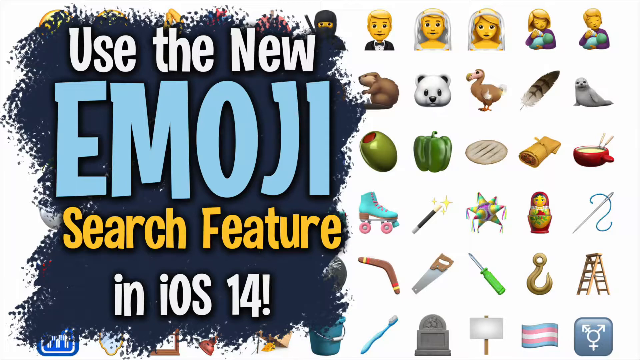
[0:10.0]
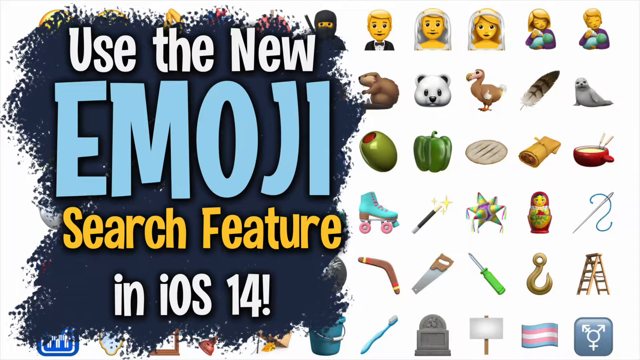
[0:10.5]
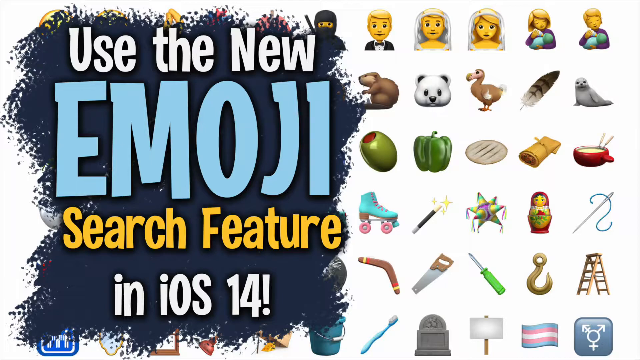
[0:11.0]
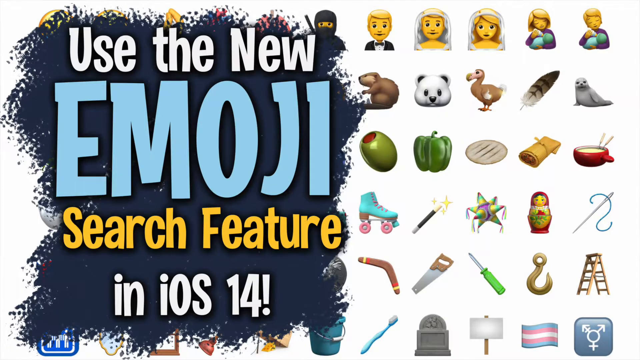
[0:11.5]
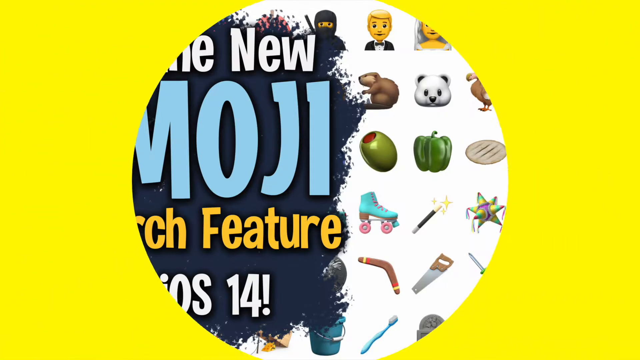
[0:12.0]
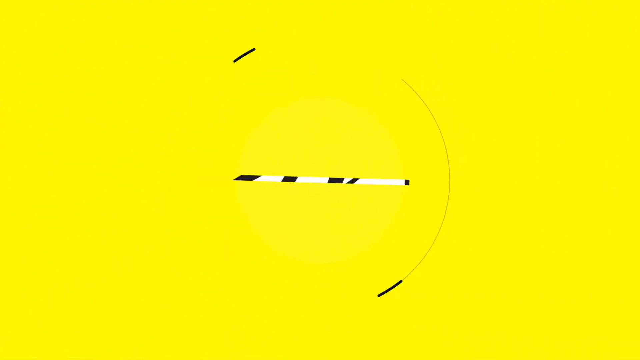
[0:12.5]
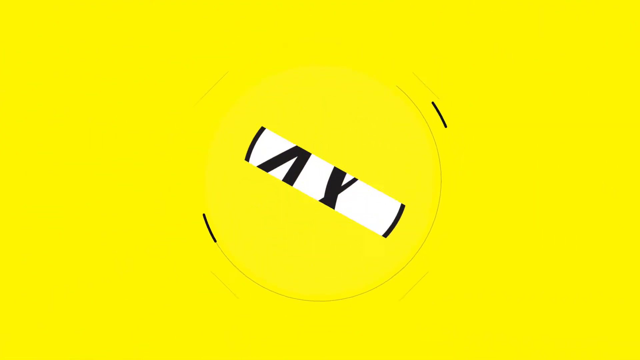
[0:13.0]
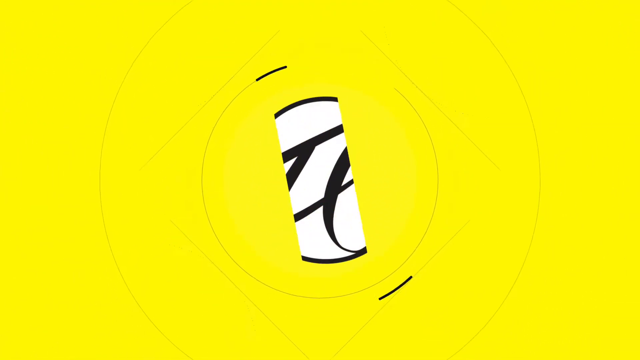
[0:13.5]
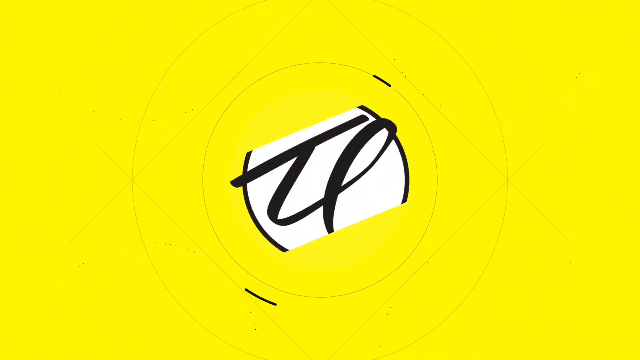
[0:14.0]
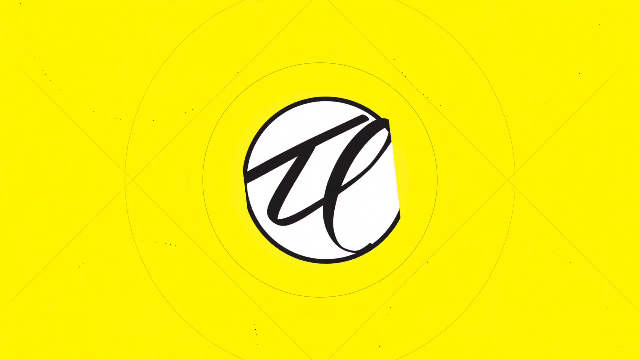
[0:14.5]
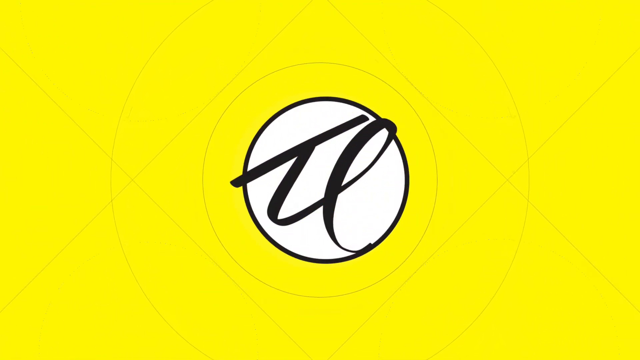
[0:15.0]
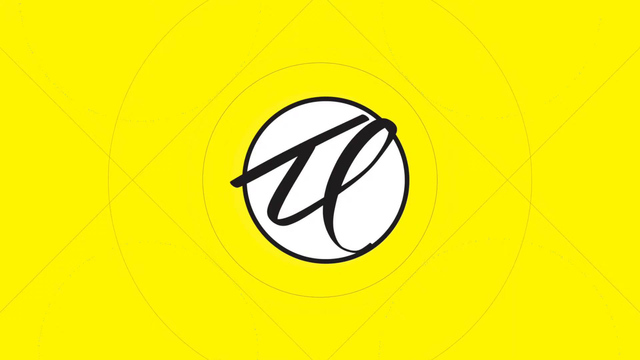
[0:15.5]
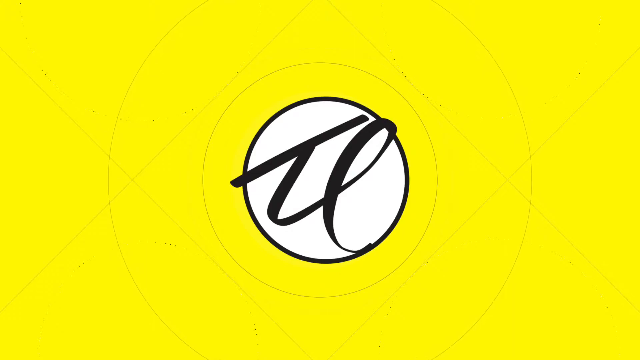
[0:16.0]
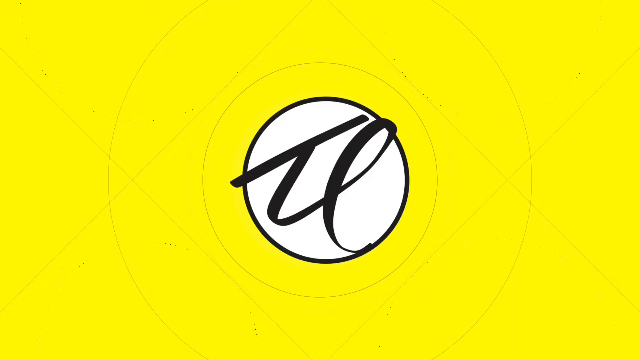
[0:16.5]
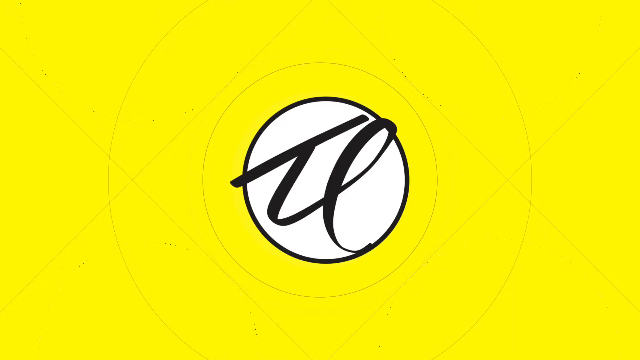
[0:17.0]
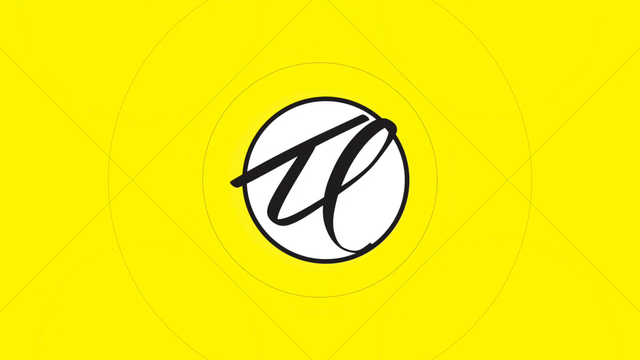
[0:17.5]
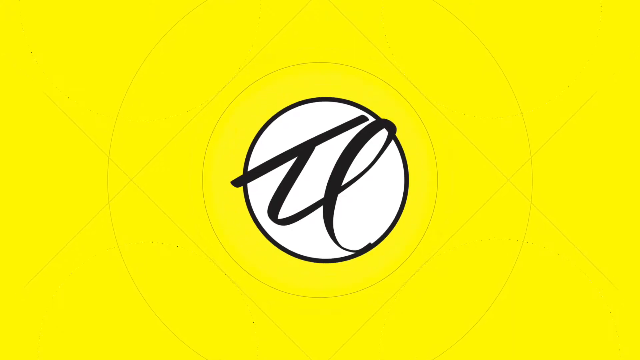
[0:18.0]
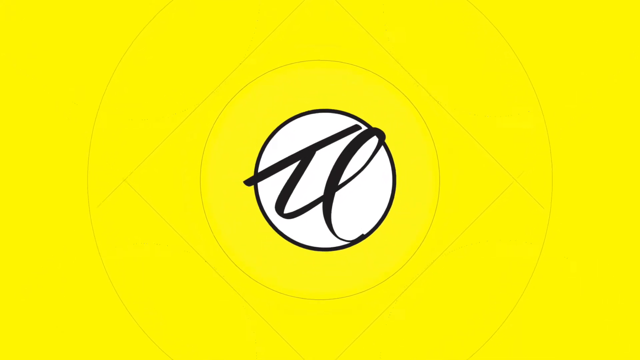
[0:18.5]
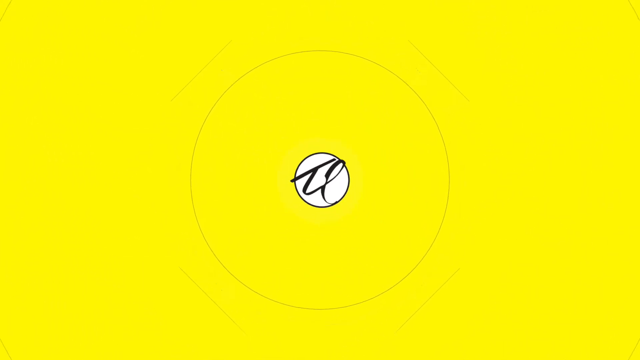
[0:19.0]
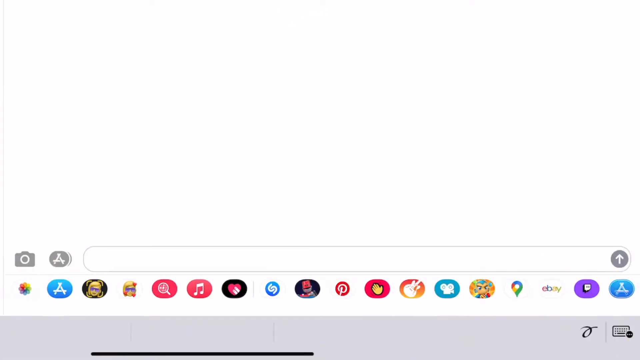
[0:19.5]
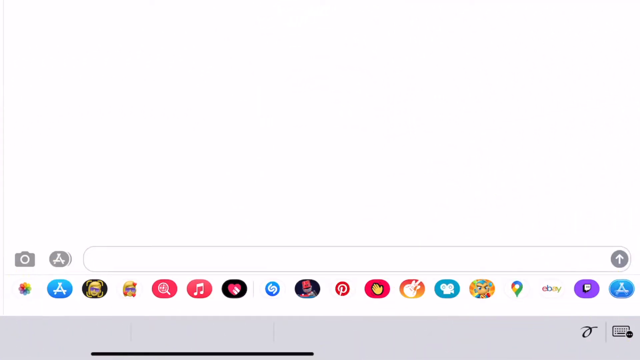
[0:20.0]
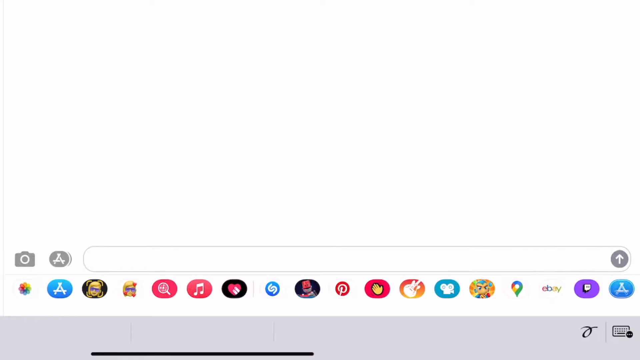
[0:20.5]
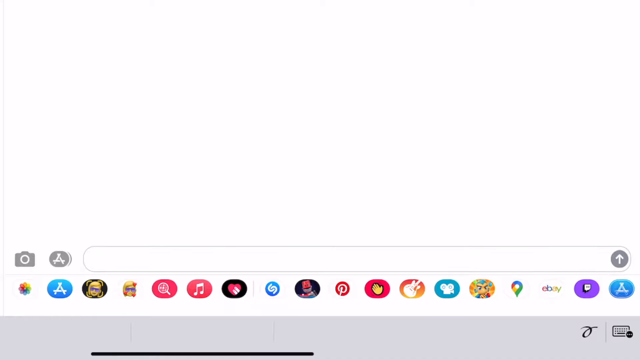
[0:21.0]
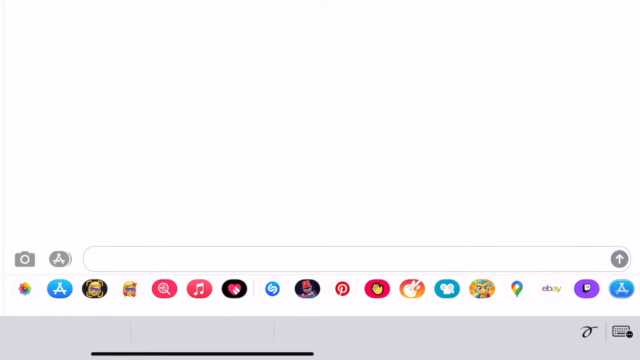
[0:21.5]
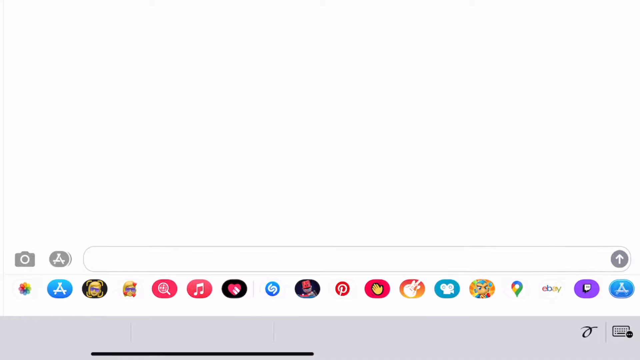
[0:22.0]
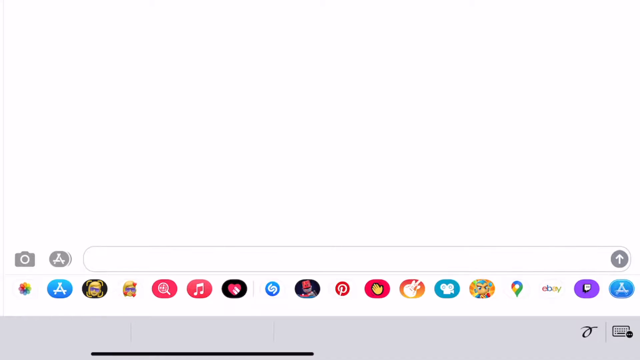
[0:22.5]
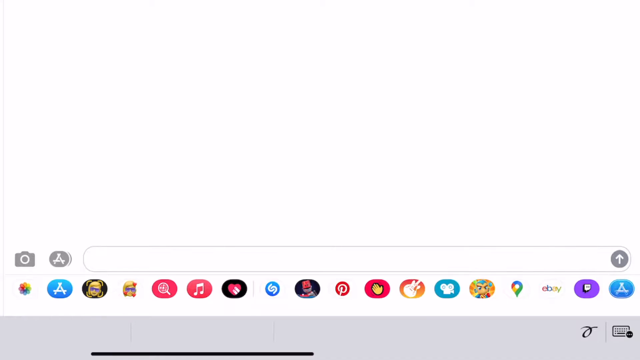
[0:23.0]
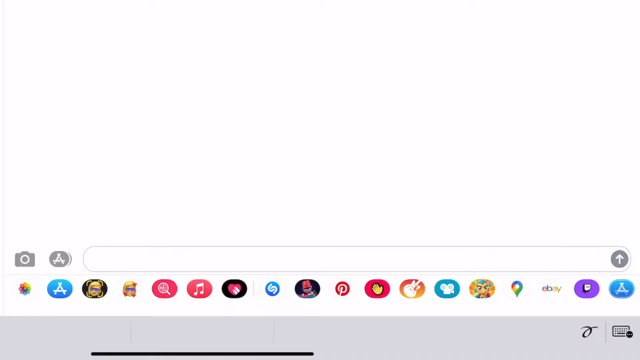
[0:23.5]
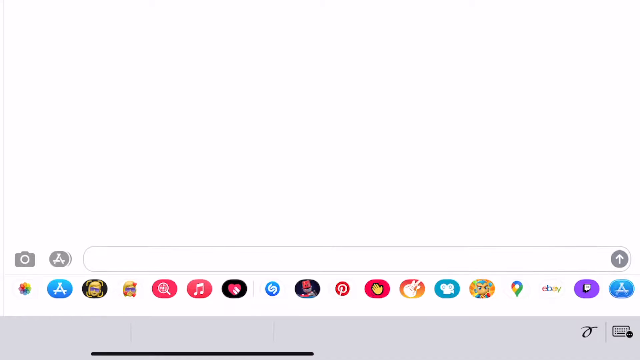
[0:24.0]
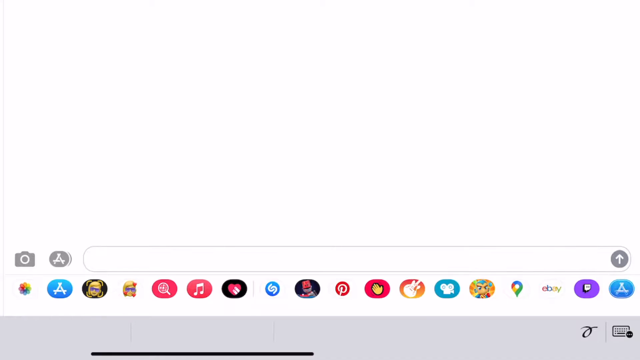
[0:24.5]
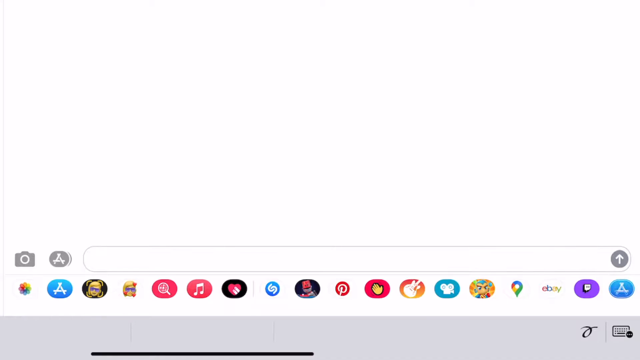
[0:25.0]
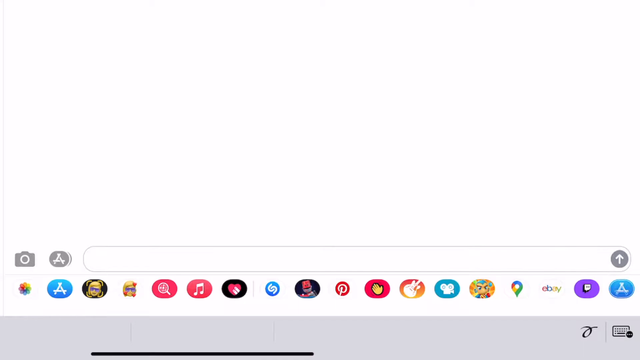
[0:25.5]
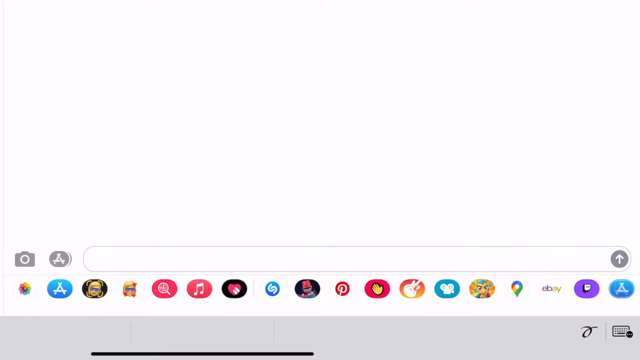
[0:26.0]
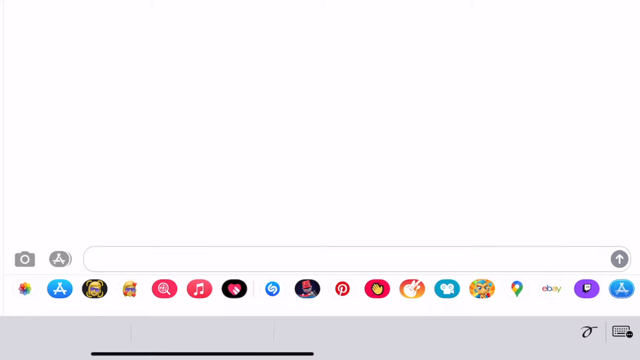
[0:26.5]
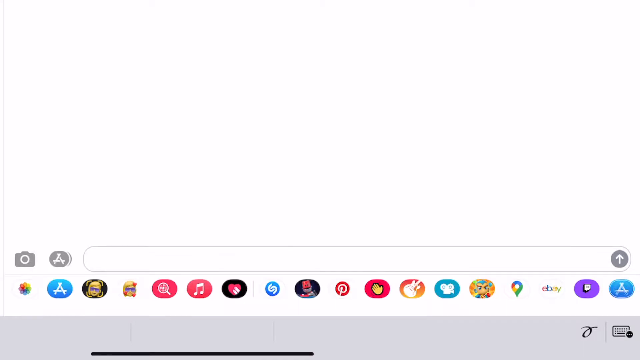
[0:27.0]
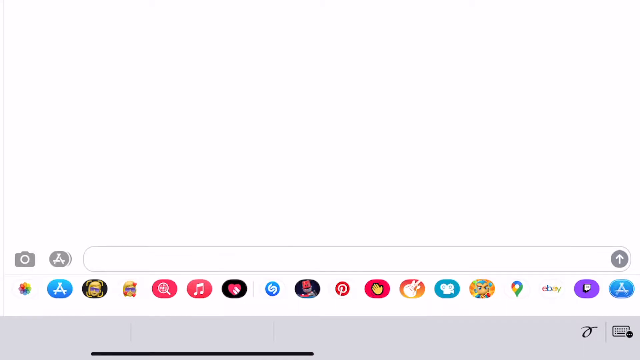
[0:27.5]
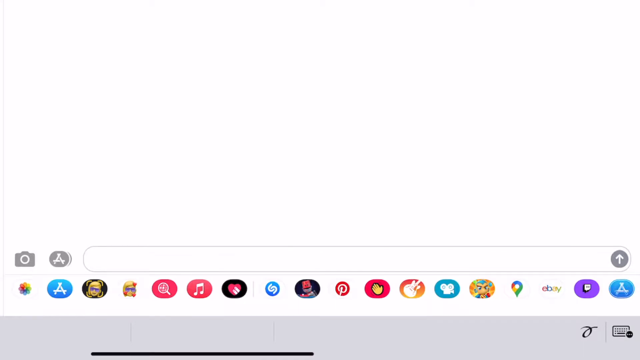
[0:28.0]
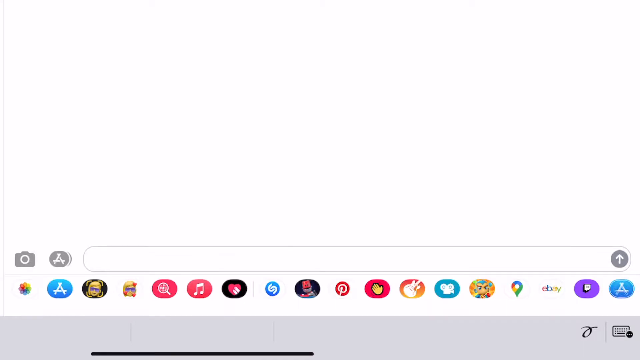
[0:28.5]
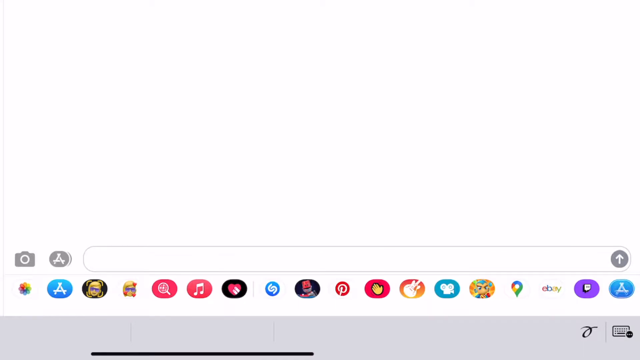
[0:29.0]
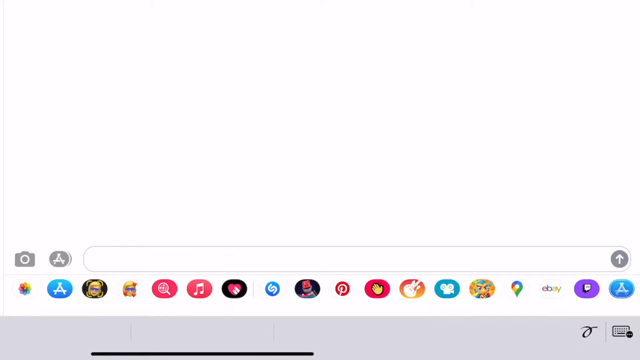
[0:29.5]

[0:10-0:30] The same title screen appears, reading "use the new emoji search feature in iOS 14," with all the emojis in the background and the blue smudge with the words on top of it on the left-hand side. The screen then turns yellow, with a white circle in the middle containing what looks like a cursive "TL." Next comes a picture of a computer screen with lots of different icons along the bottom, including the App Store, music and Pinterest icons; the rest of the screen is all white. Example emojis include a bride and a groom, a mom and a dad, different animals such as a panda and a seal, a feather, a green olive, a green pepper, a stacking doll, a ladder, a screwdriver, a saw, a roller skate, a hook, and what looks like a cup of tea.